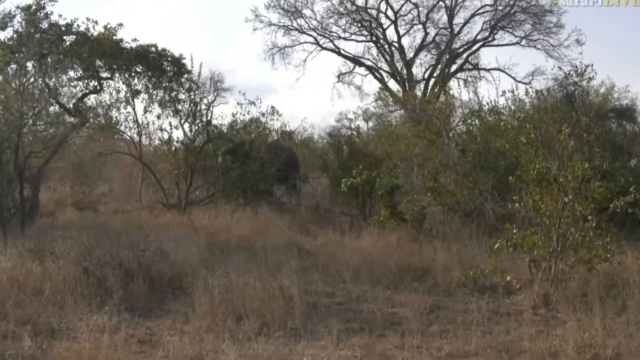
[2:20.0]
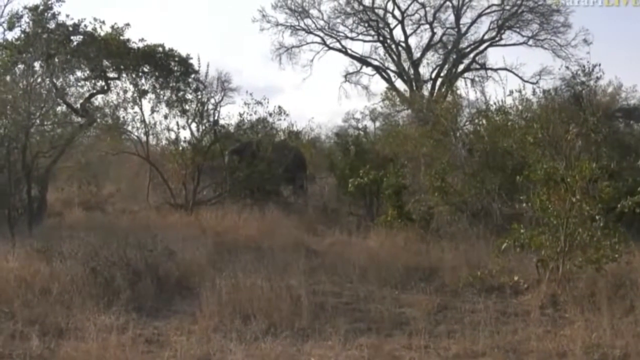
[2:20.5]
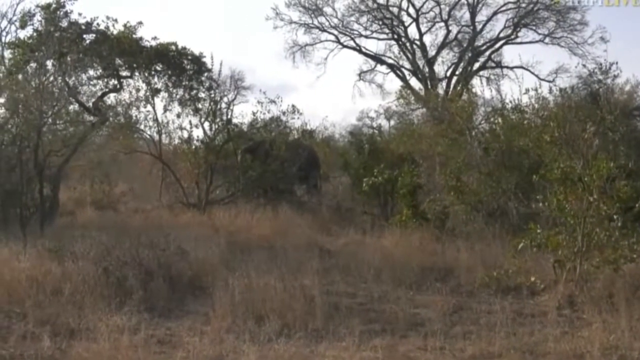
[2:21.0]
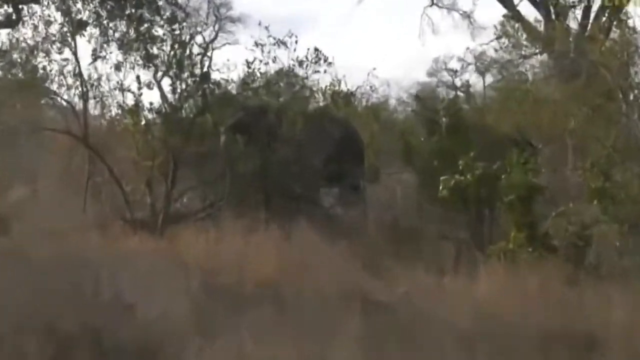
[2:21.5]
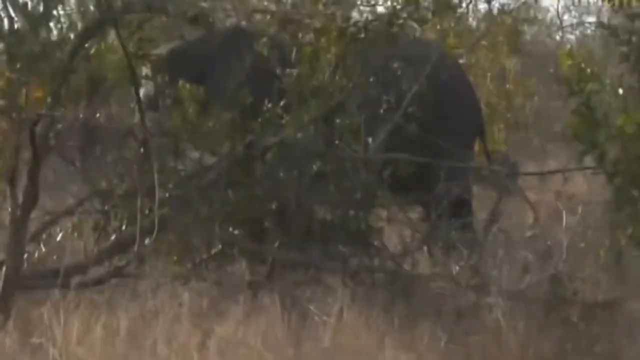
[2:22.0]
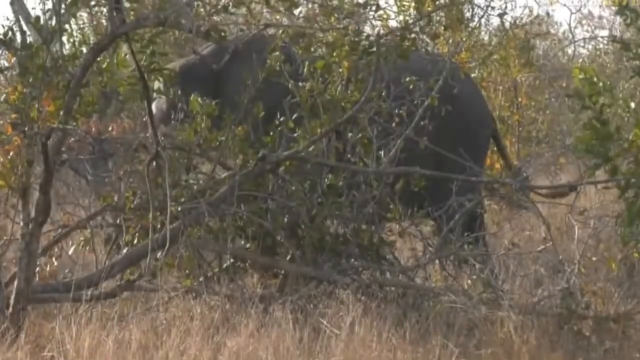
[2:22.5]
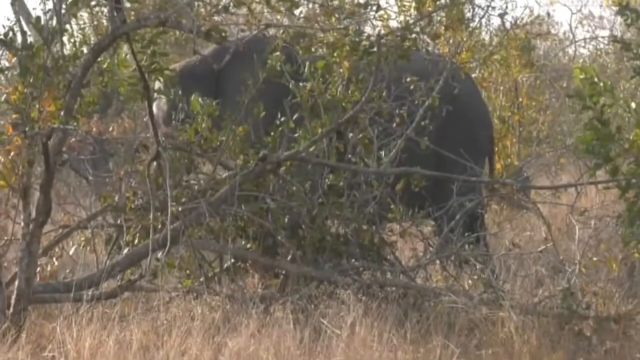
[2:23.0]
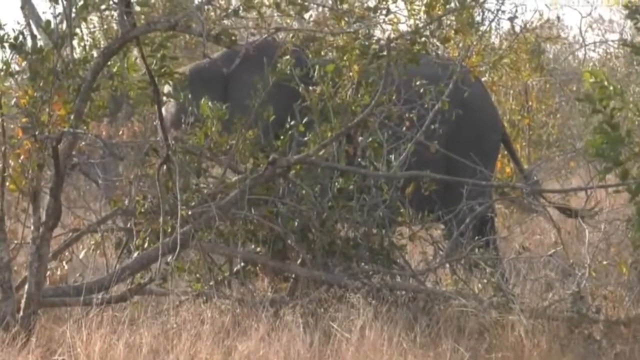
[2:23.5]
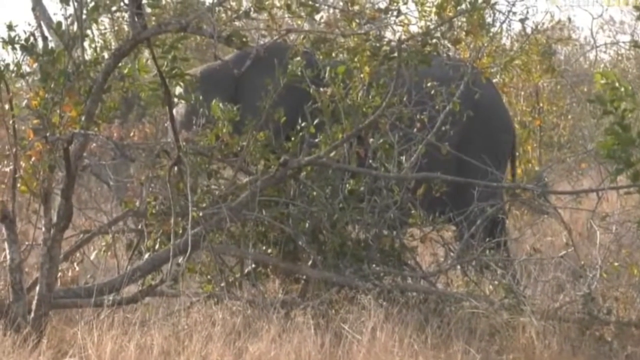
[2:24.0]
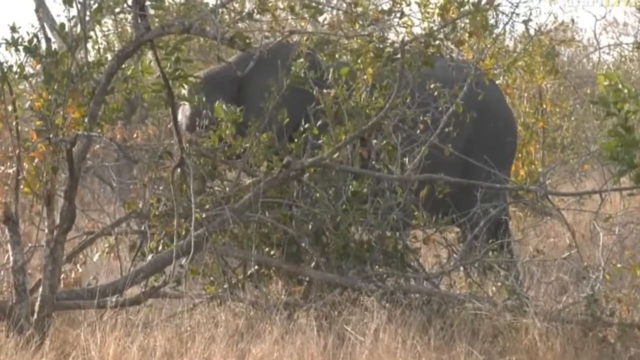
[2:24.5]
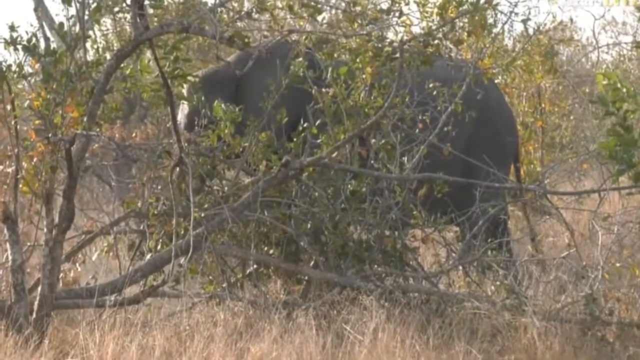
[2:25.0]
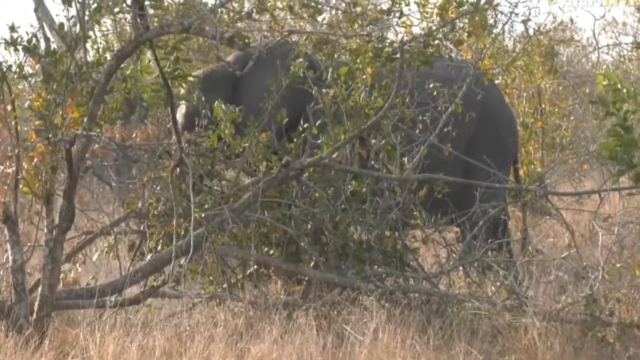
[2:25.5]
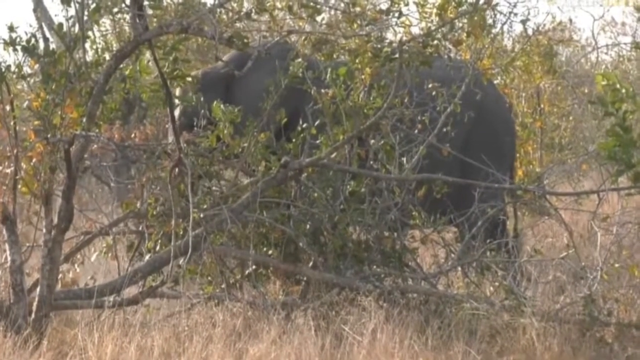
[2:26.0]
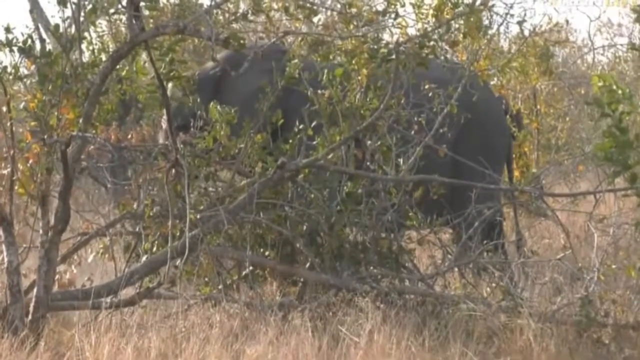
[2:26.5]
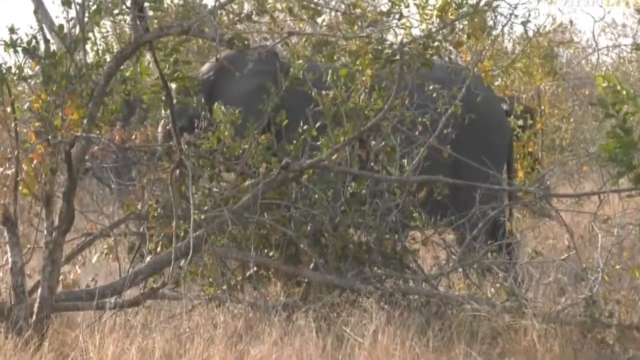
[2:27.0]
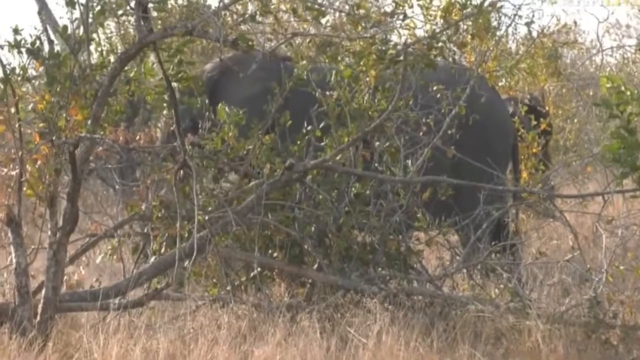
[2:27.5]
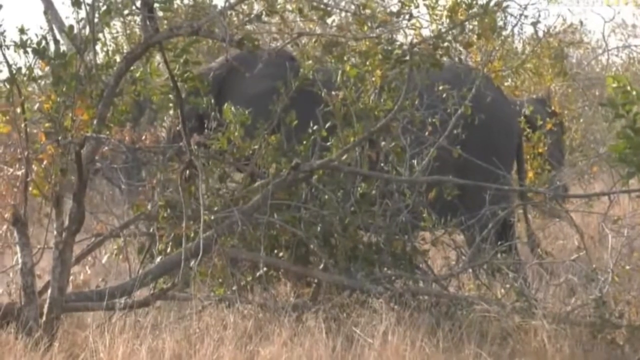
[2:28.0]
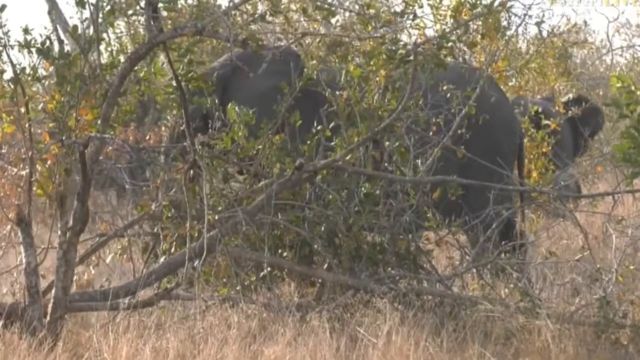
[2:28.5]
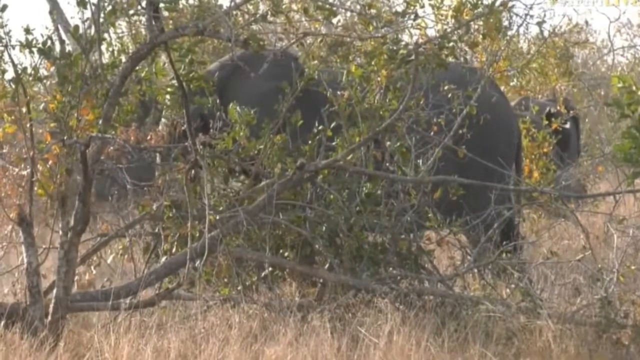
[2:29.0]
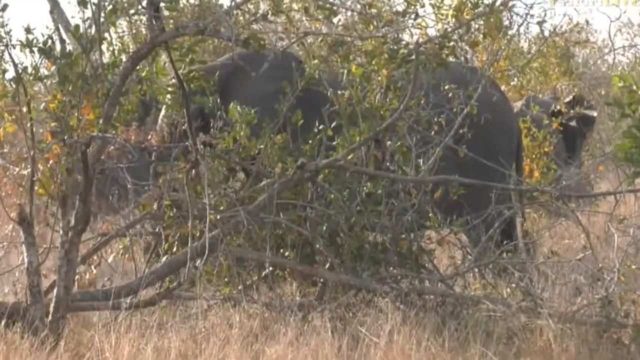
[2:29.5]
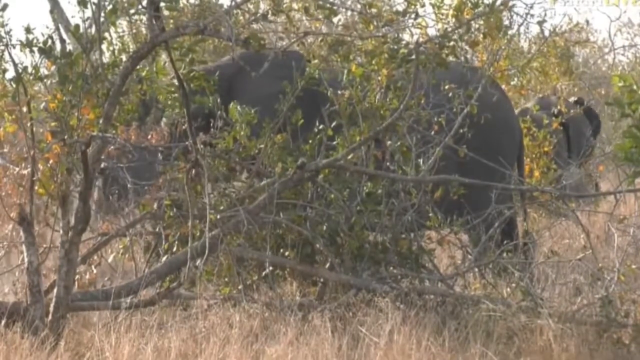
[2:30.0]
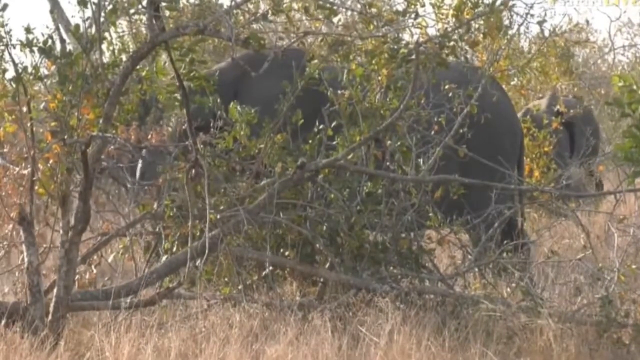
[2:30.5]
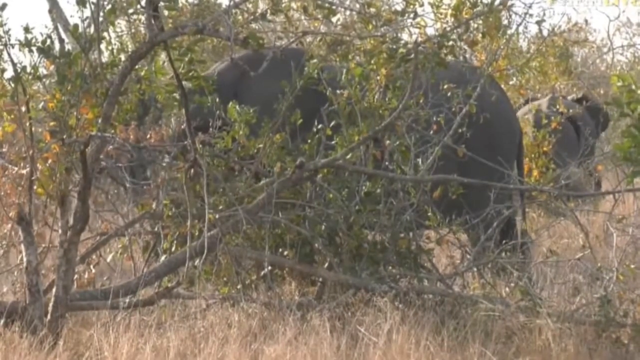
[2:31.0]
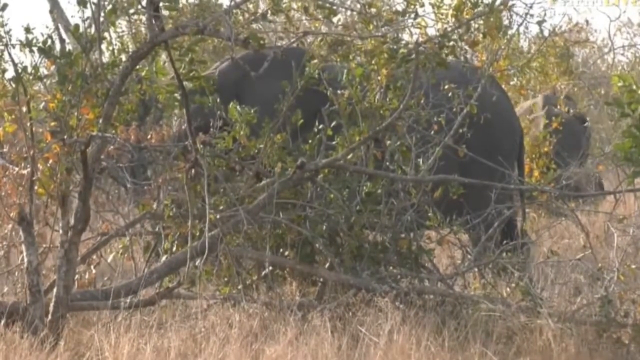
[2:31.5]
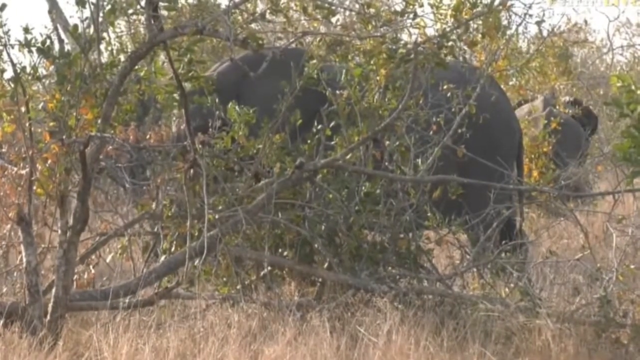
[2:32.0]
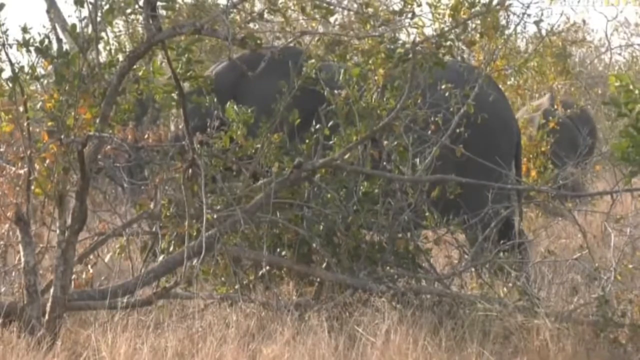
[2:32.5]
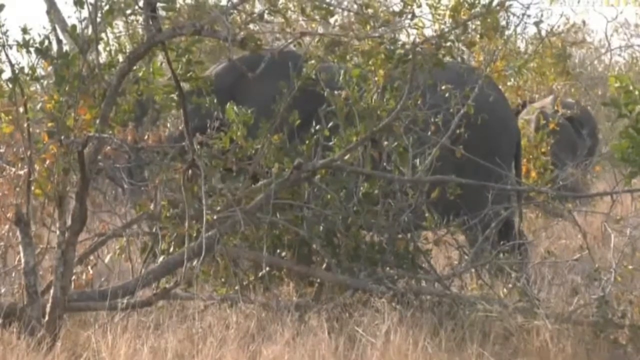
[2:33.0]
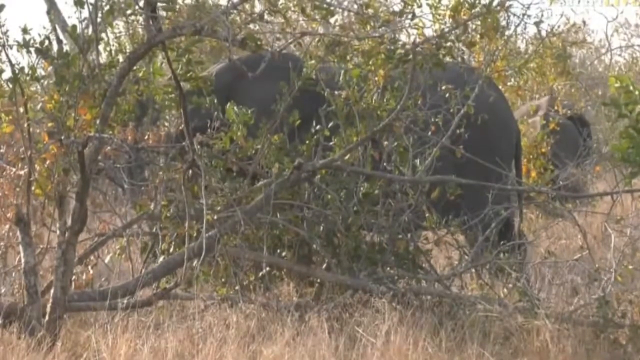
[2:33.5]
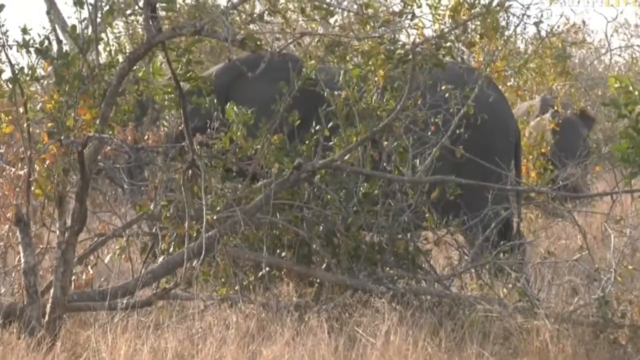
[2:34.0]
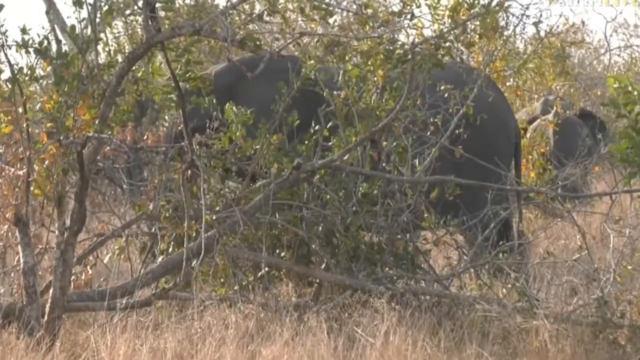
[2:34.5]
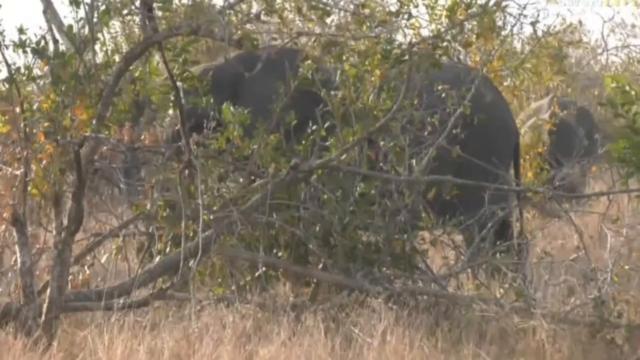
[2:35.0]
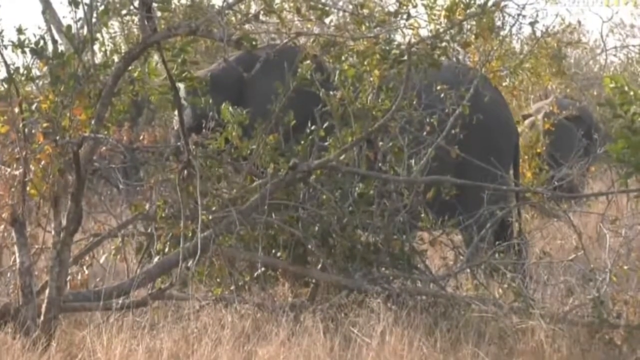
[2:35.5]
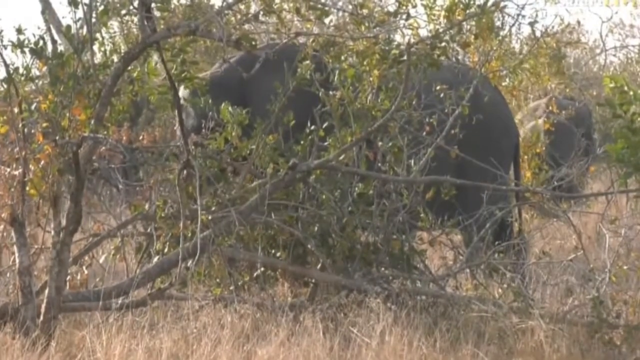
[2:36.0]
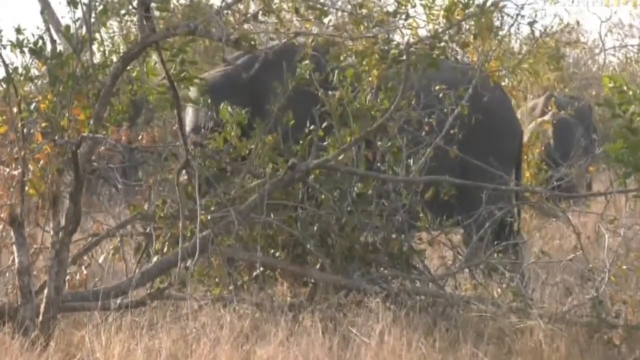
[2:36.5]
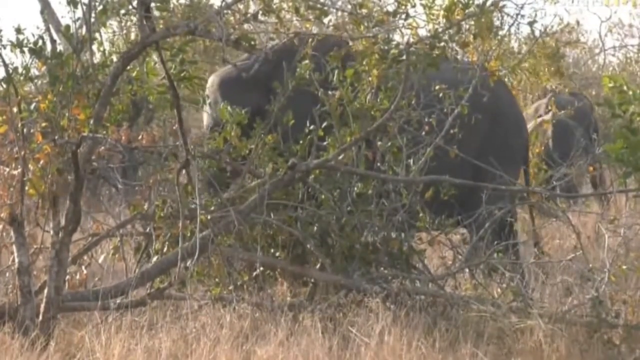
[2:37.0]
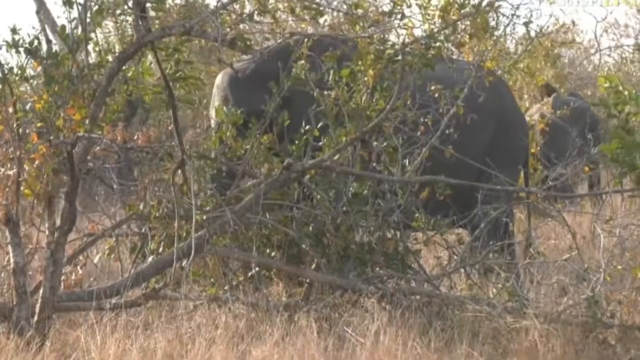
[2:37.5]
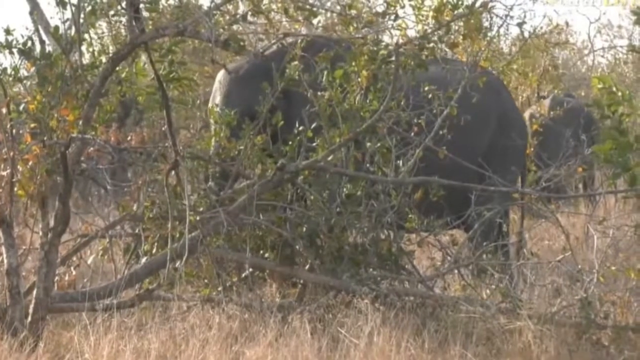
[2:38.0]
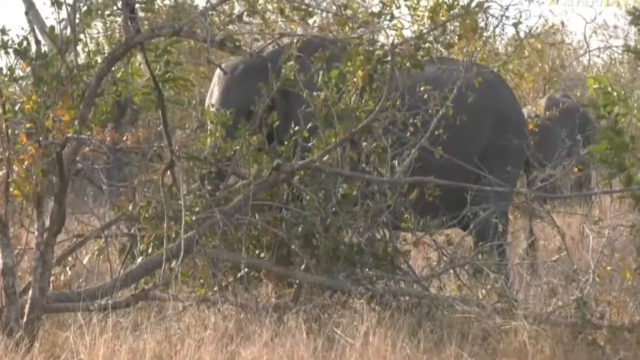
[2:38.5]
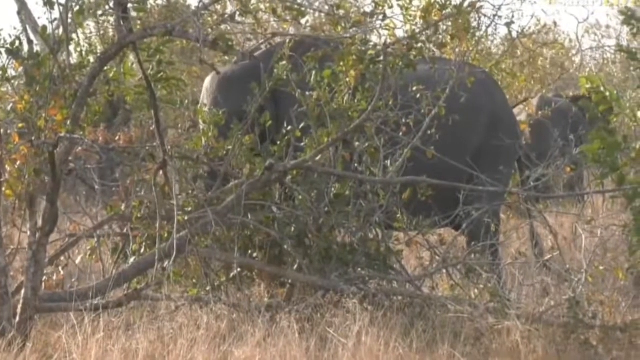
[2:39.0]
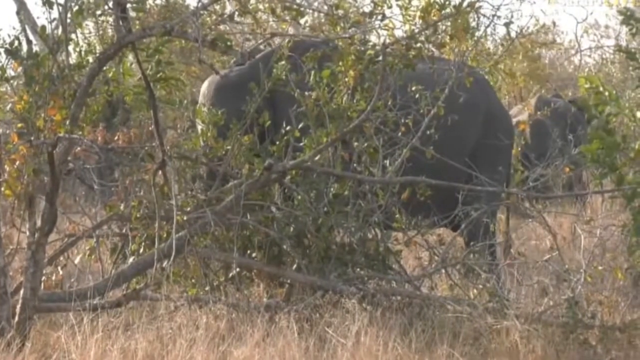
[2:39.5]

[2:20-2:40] The shot is from a distance and no longer magnified, showing more of the habitat. The camera then focuses on one elephant by itself, hard to see because a lot of brush is in front of the camera and the branches block the view. It looks to be grazing a little; its trunk sways a bit and it is possibly putting some vegetation in its mouth. Its tail moves gently, apparently just to adjust itself. In the distance another elephant is eating in the background; its head is visible as it moves away, and then mainly its rear.